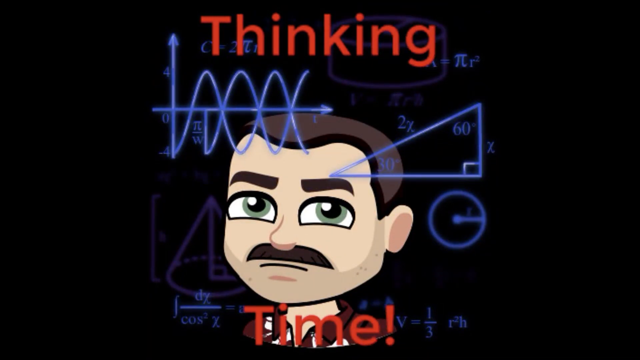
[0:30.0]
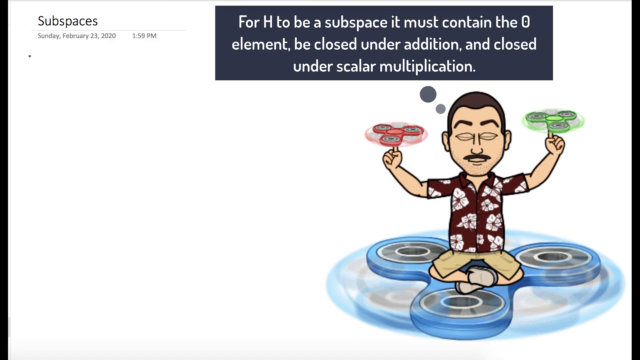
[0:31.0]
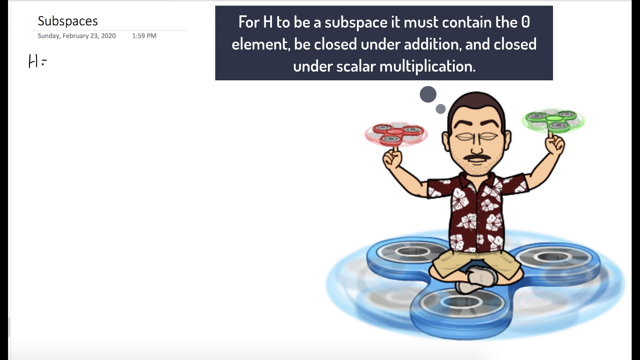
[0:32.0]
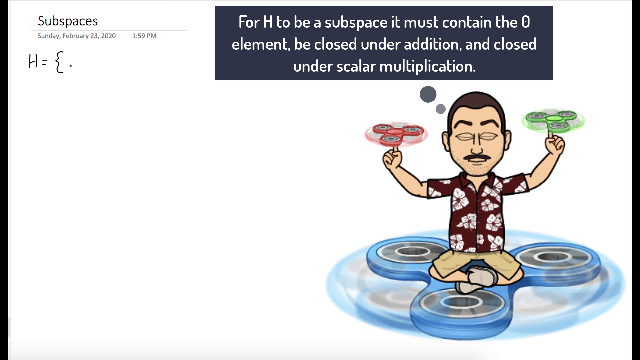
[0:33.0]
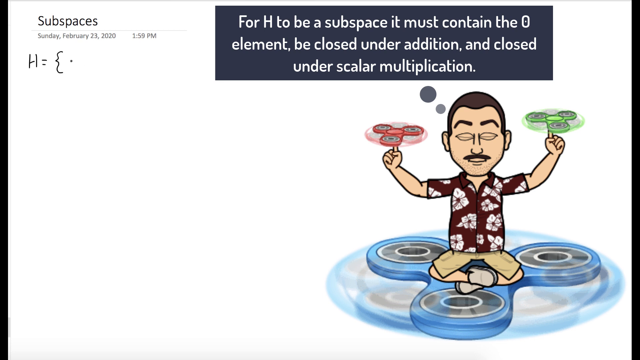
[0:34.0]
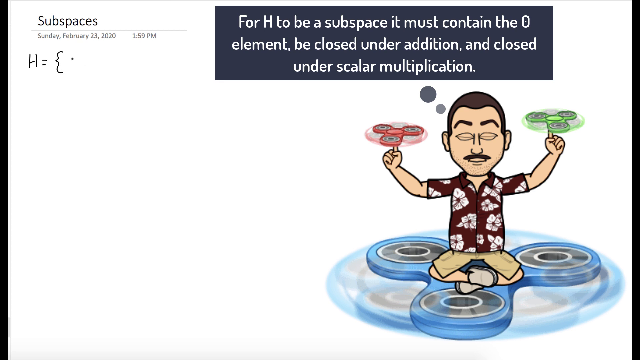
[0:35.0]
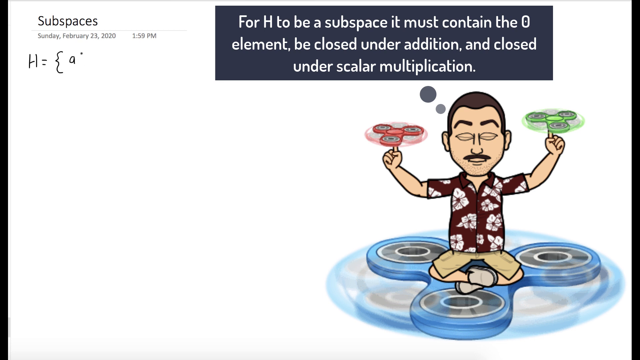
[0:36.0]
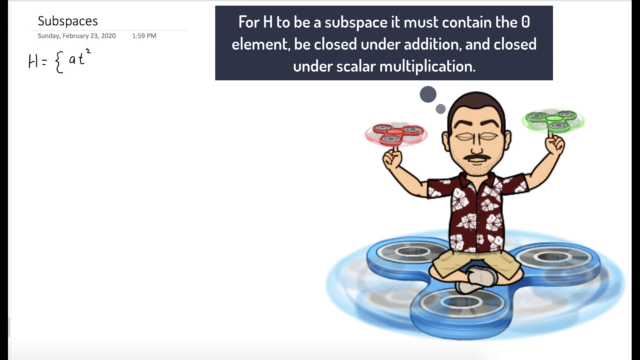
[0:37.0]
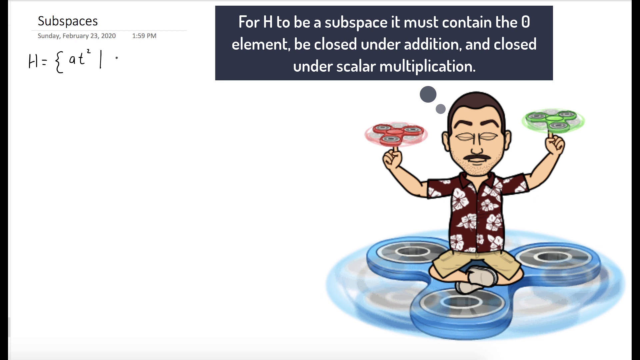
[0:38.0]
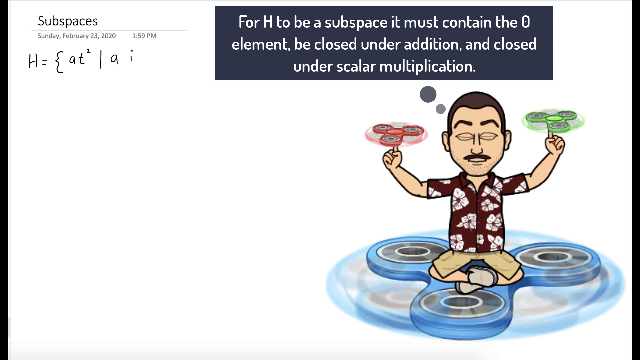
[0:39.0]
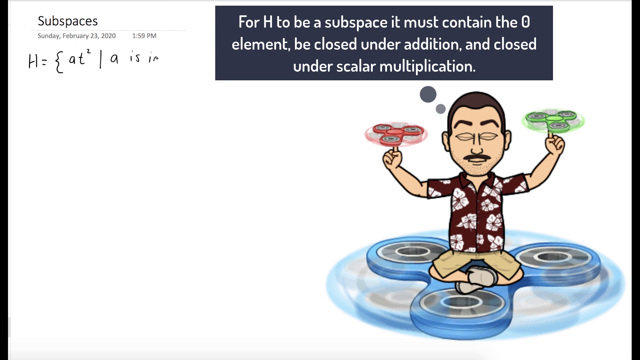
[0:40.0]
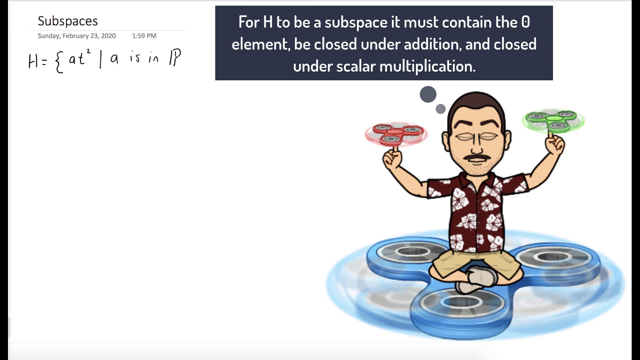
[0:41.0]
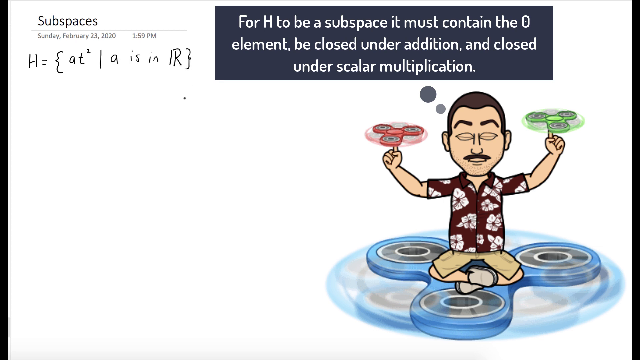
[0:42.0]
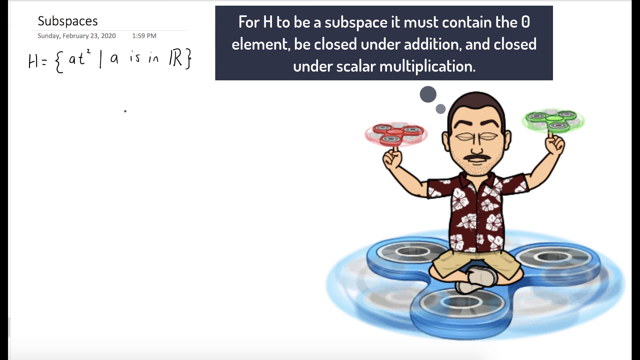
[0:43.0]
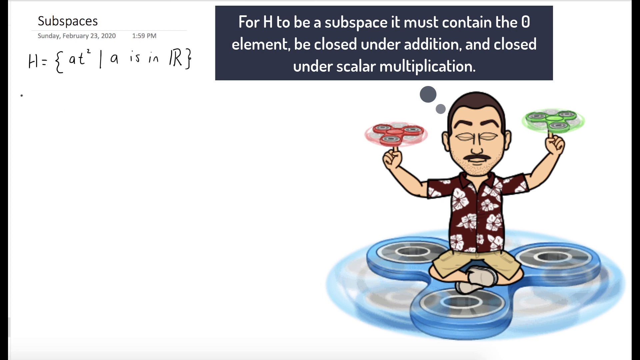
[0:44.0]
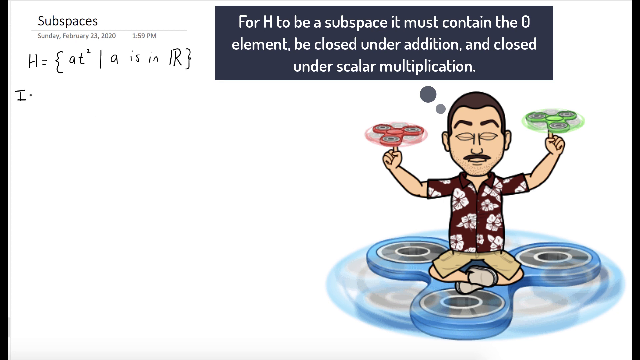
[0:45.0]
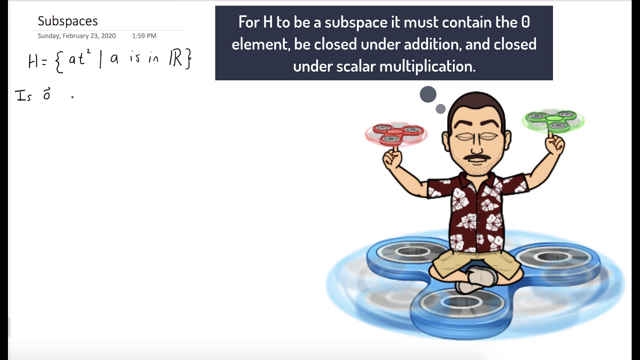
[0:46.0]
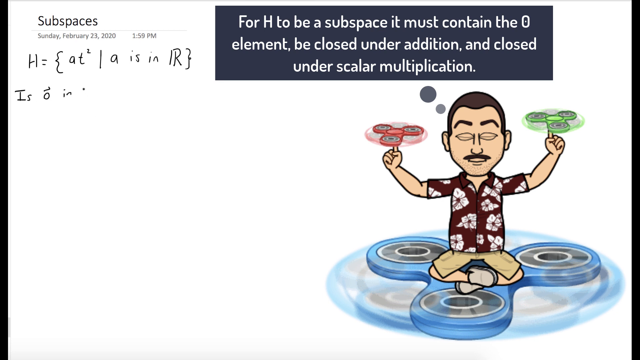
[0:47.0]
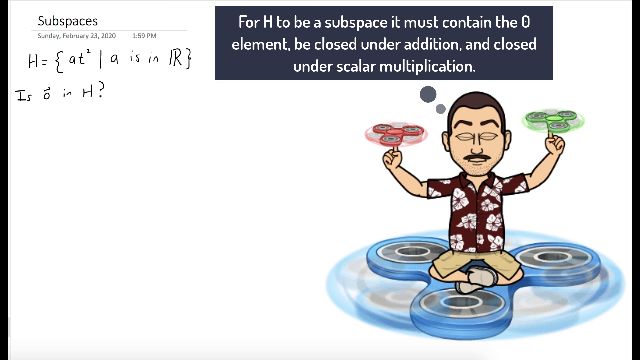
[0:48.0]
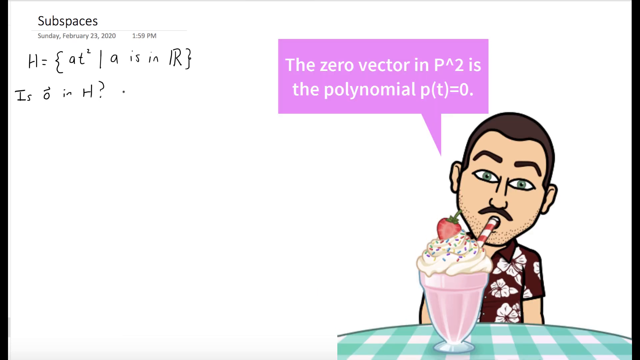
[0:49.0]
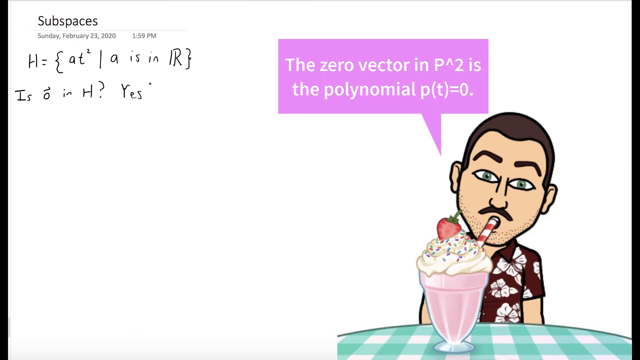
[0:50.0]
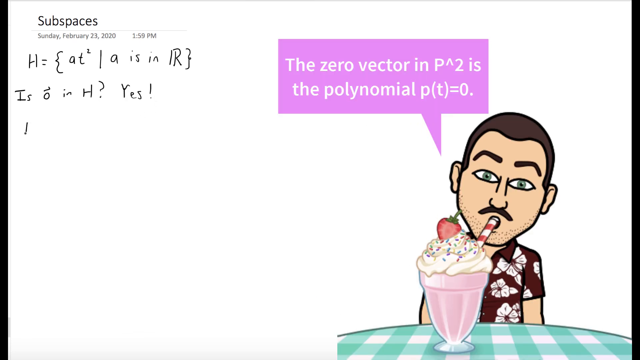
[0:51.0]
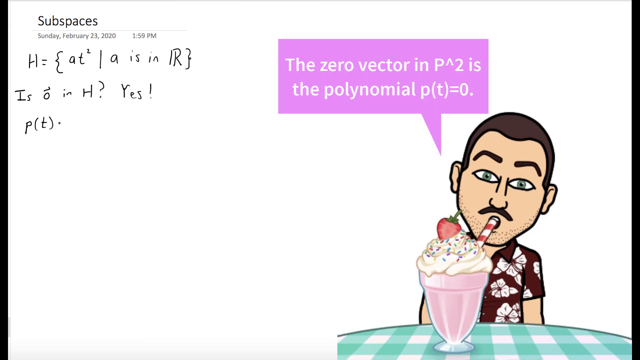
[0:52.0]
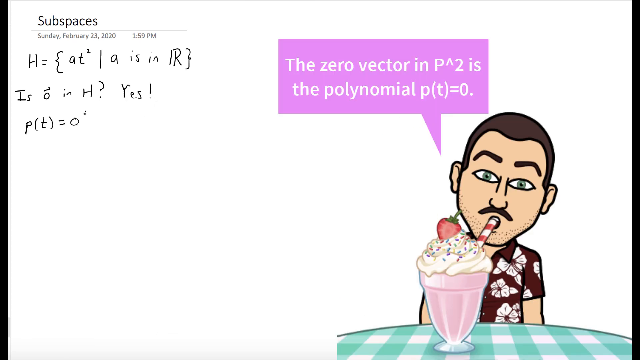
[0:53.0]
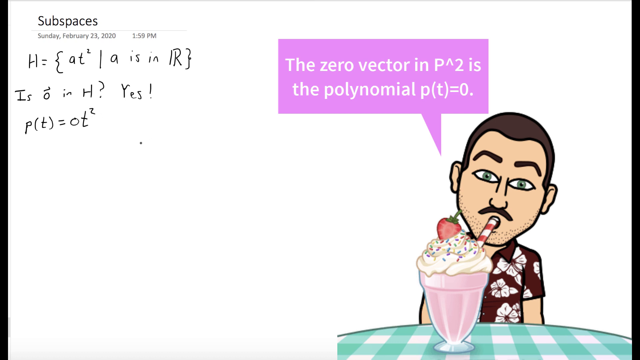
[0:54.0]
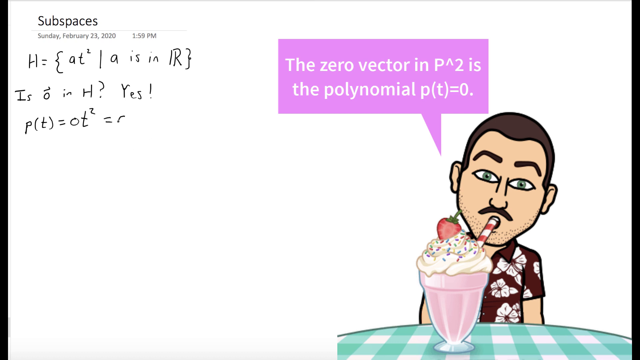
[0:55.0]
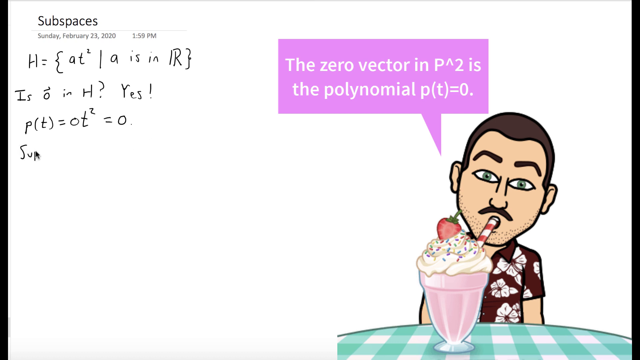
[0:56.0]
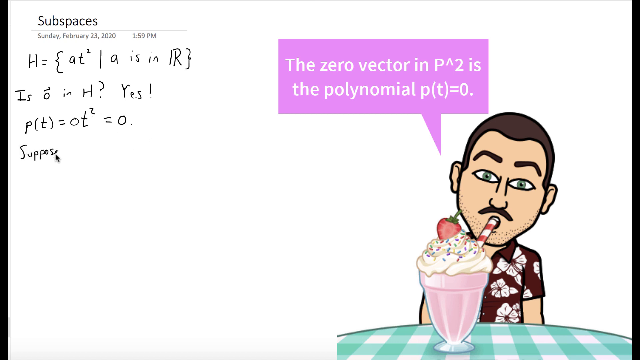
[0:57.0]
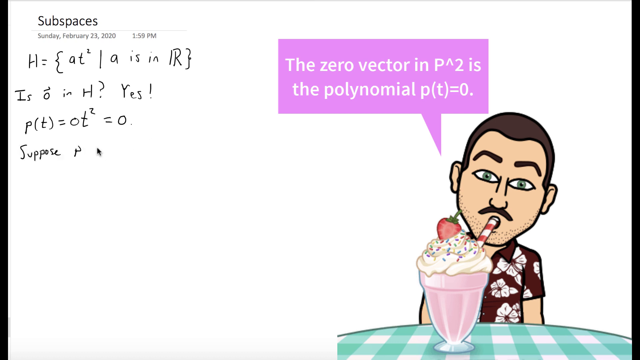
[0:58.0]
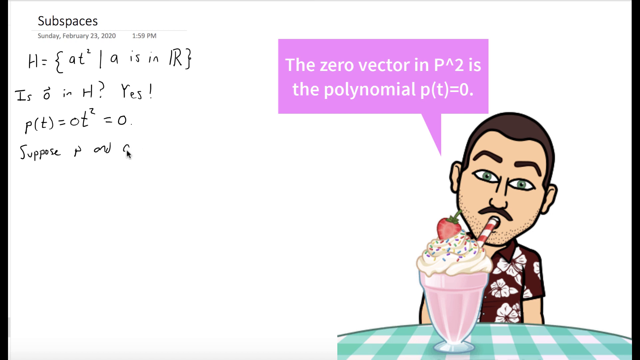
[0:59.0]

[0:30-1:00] The thinking-time page, with its geometric patterns, shapes, and cartoon characters, zooms in and fades away until a white page appears. In the upper left corner, black text reads "subspaces sunday february 23rd 2020 at 1:59 p.m." At the bottom right of the screen, the cartoon character in the Hawaiian shirt and khaki pants sits cross-legged on top of a fidget spinner, with a red fidget spinner spinning on one finger and a green fidget spinner spinning on the other. His eyes are closed, and a dark gray thought bubble reads "for h to be a subspace it must contain the zero element be closed under addition and closed under scalar multiplication." A cursor appears and starts to scribble on the left-hand side of the page, writing an equation in black, then moving downward and writing another equation. The cartoon figure then changes: he is now drinking a strawberry milkshake with whipped cream on top, a red and white straw, sprinkles, and a strawberry topping. A pink chat bubble pops out of his mouth reading "the zero vector in P2 is the polynomial" followed by the polynomial equal to zero. The cursor continues writing on the left-hand side of the screen.